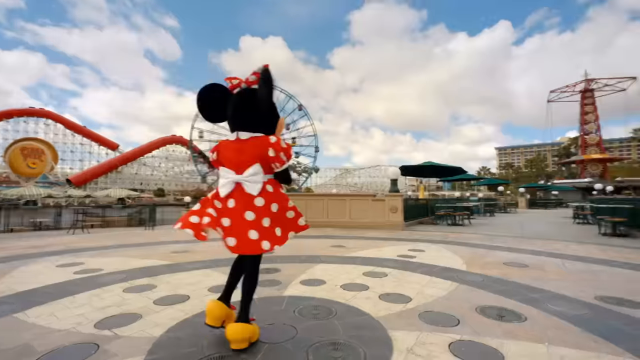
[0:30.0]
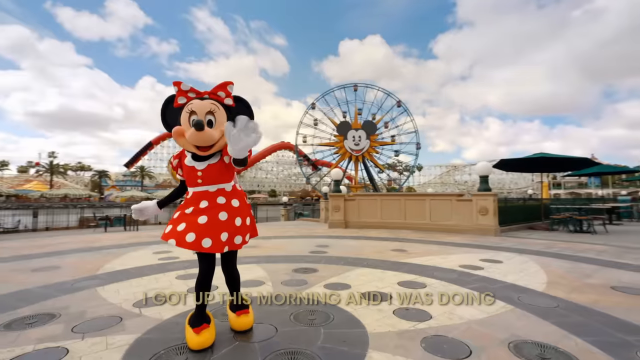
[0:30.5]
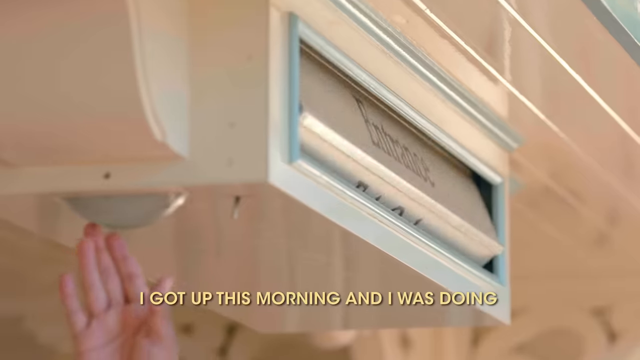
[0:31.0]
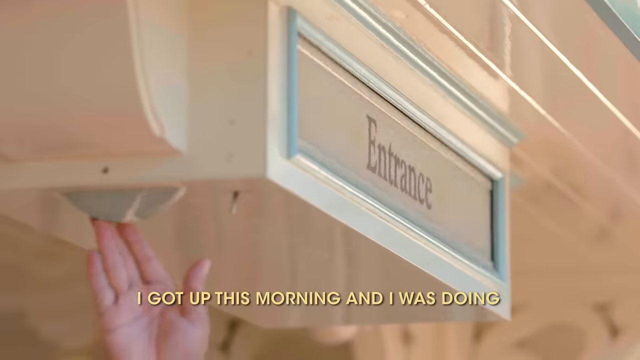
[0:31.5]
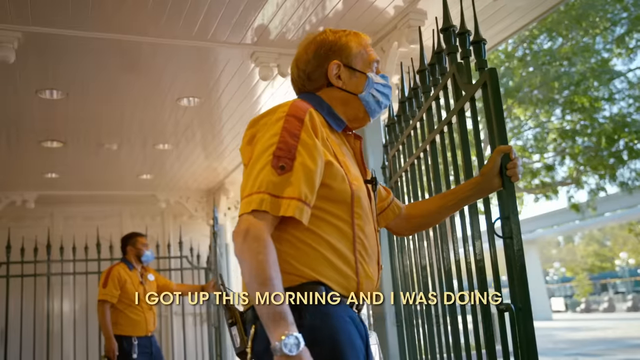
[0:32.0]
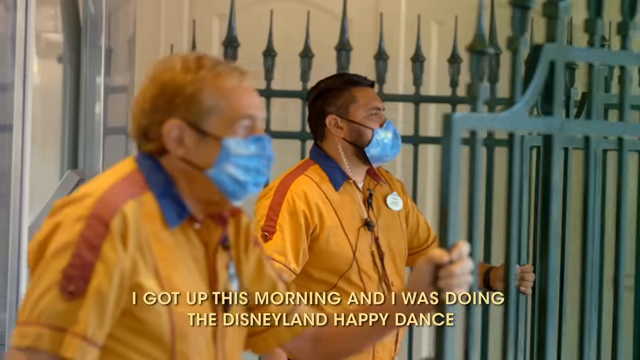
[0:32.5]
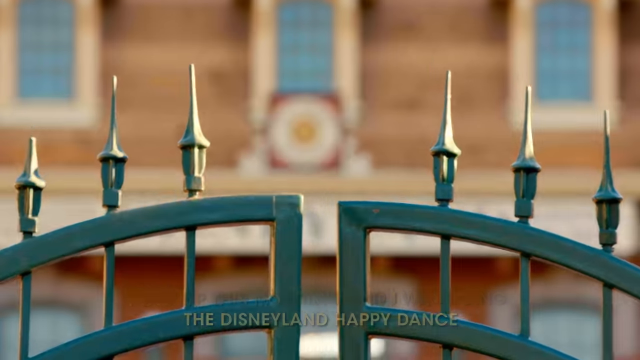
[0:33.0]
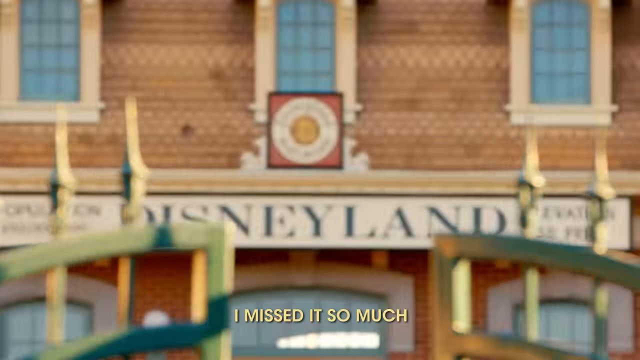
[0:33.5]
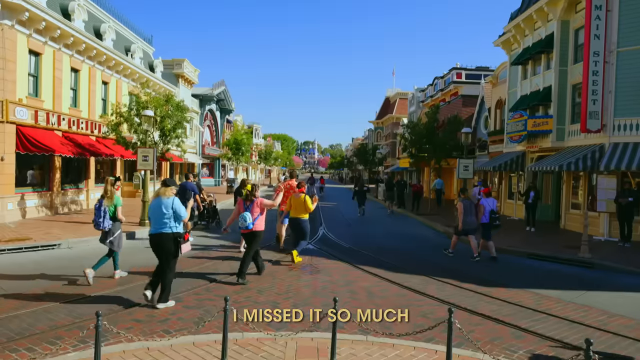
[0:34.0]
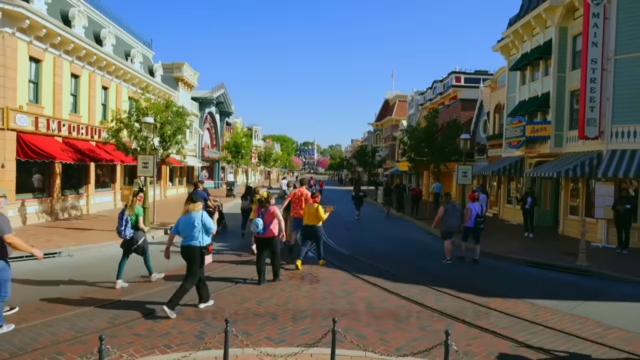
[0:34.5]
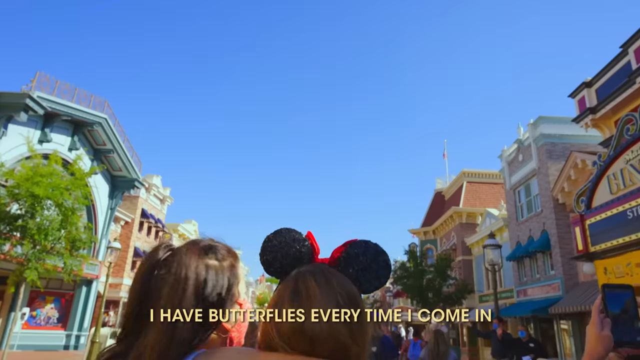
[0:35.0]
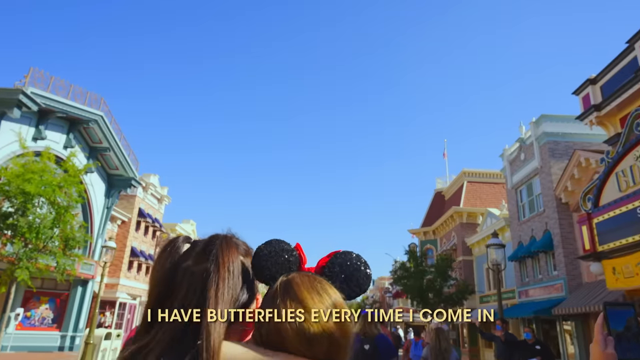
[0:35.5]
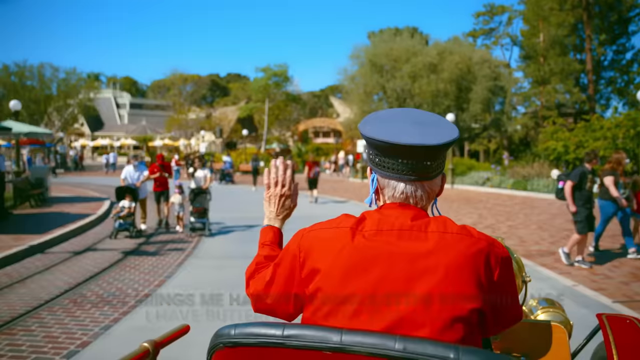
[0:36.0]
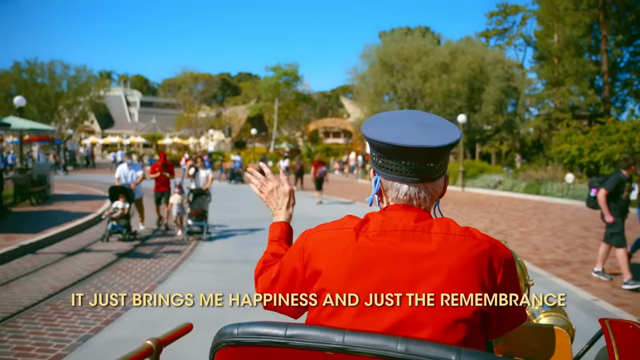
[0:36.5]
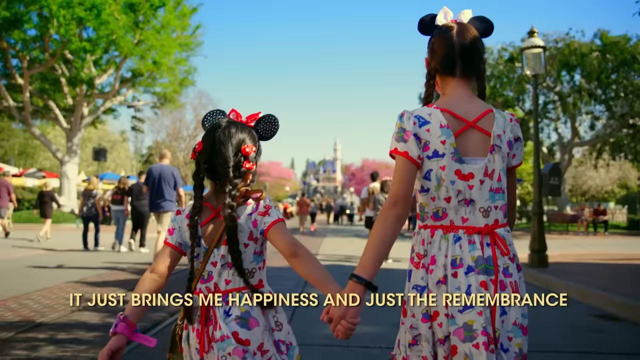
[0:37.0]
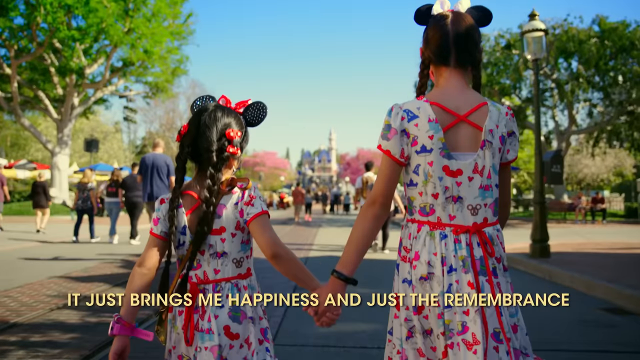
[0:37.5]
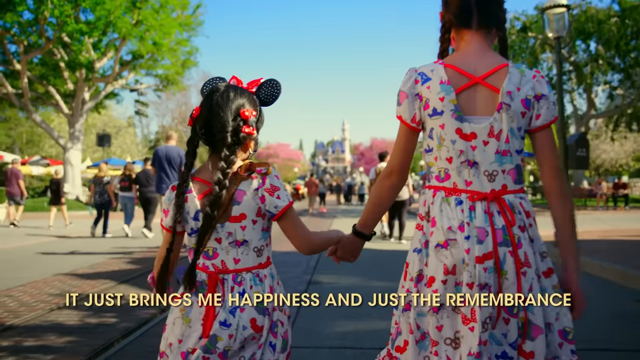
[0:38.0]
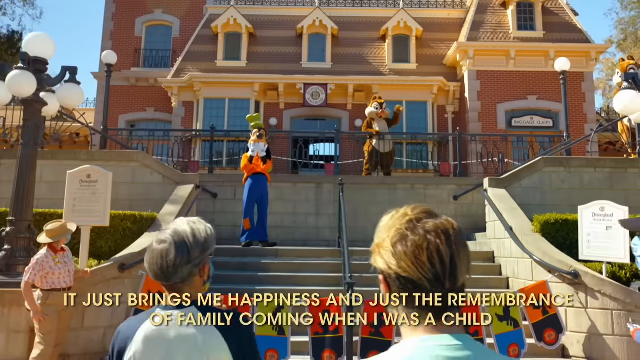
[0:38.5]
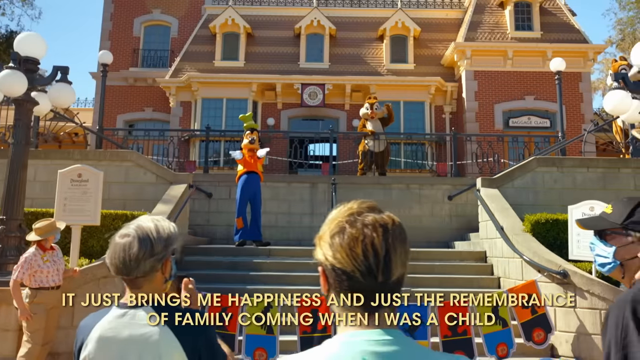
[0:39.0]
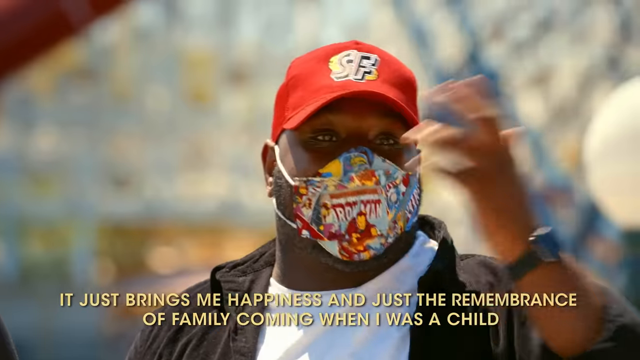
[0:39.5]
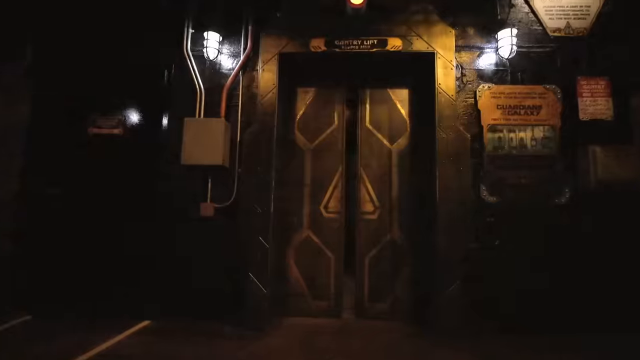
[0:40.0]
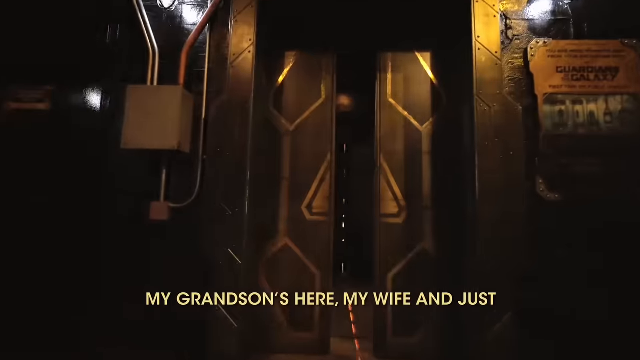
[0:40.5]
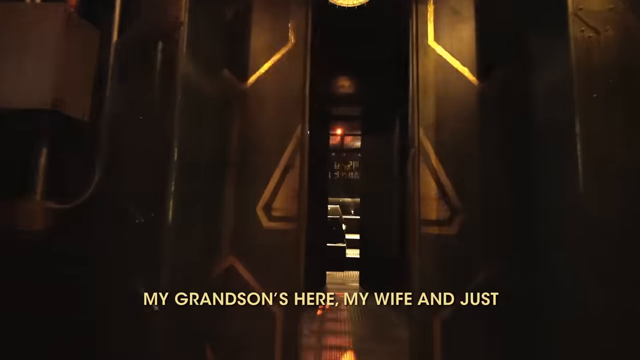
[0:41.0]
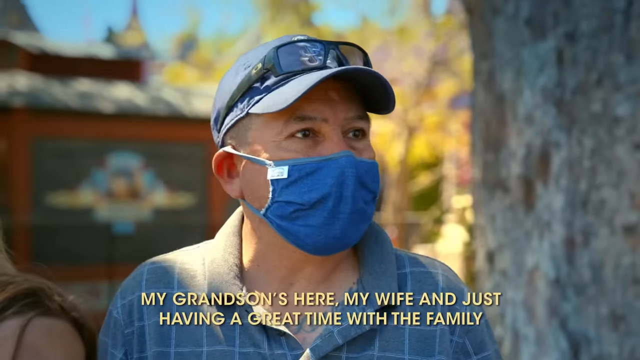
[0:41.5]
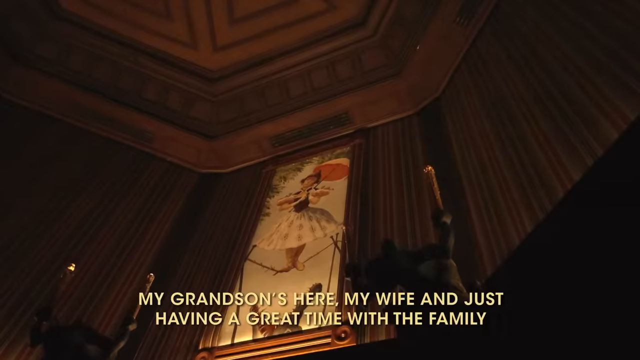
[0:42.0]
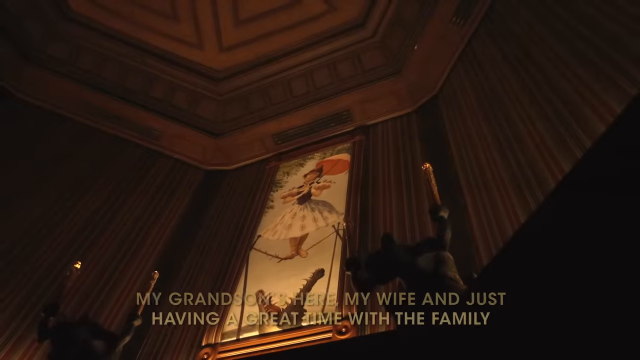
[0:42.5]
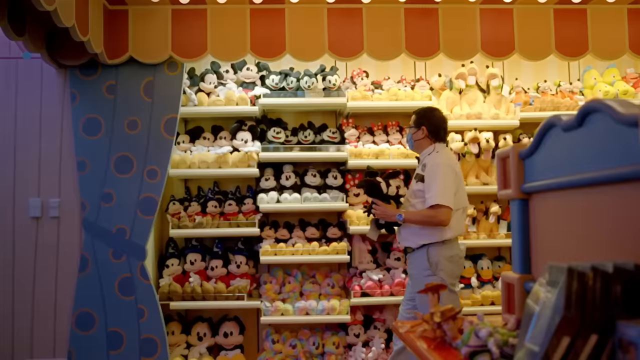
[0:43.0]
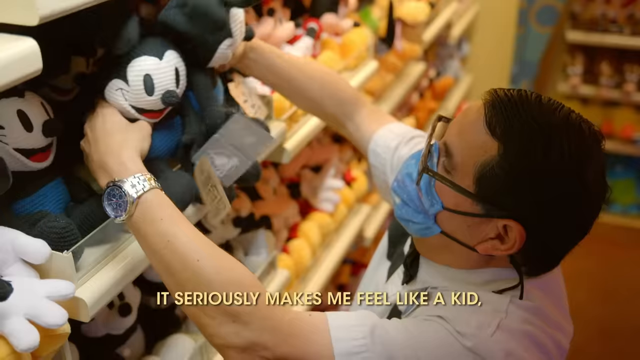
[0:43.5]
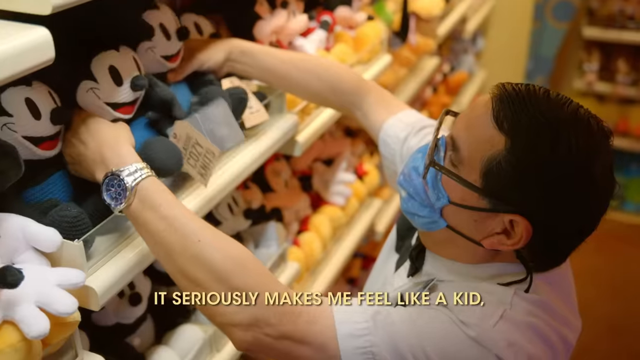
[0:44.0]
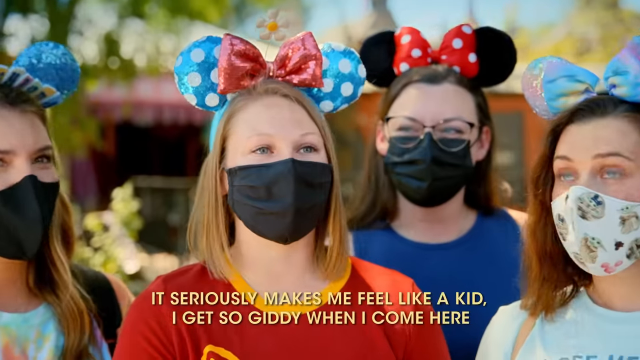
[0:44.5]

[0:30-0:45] Donald Duck and Mickey Mouse wave at each other and at the screen, followed by Minnie Mouse waving. Staff open the entrance doors and gates, and people begin entering the park in a slow-motion, dramatic way, including different families. In slow motion, people walk through the park looking at the buildings around them. A train conductor in a conductor's hat and red jacket waves at people as he goes by. There are not many people around. Quick footage shows a man preparing his shop, apparently putting various stuffed animals up on a rack. Four girls all wear Minnie Mouse-style bows and masks; the several mask references suggest this could be a post-COVID welcome back. A very grand-looking elevator opens up. An older man speaks to the camera, apparently giving his feedback. The chipmunks, in their mascot costumes, wave.